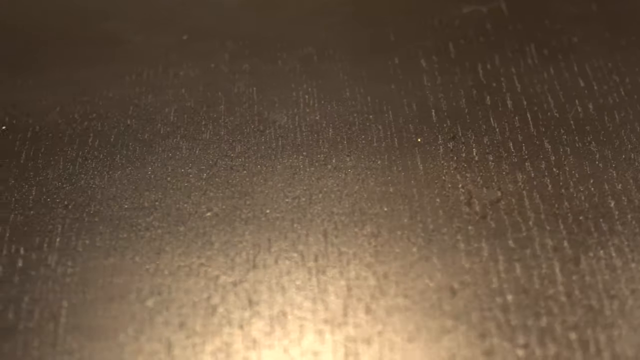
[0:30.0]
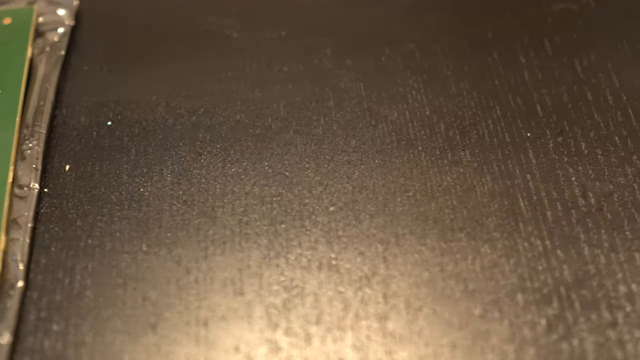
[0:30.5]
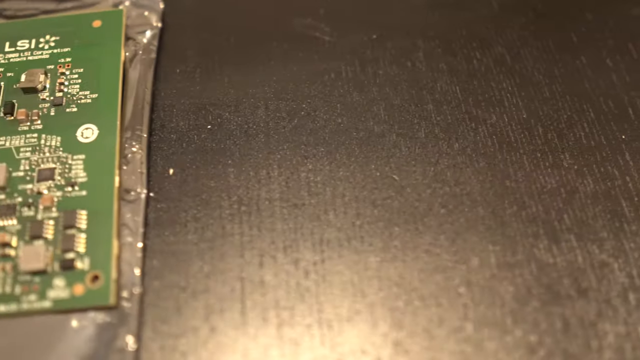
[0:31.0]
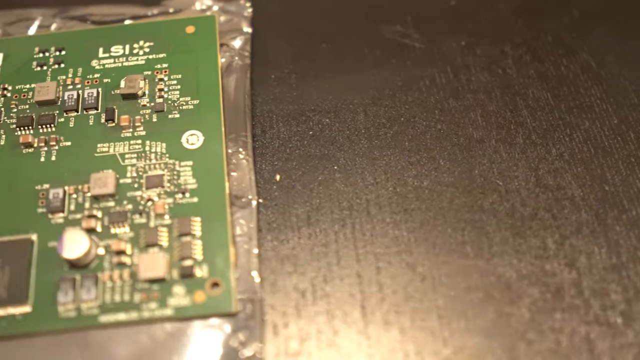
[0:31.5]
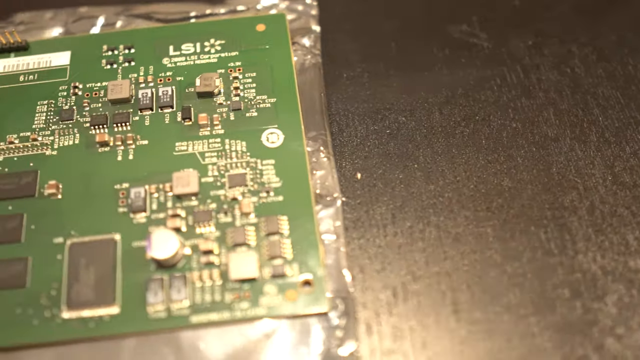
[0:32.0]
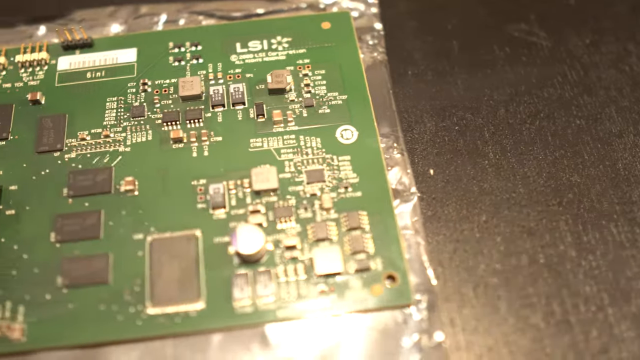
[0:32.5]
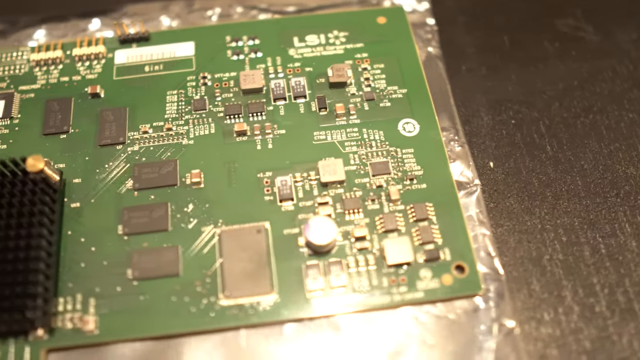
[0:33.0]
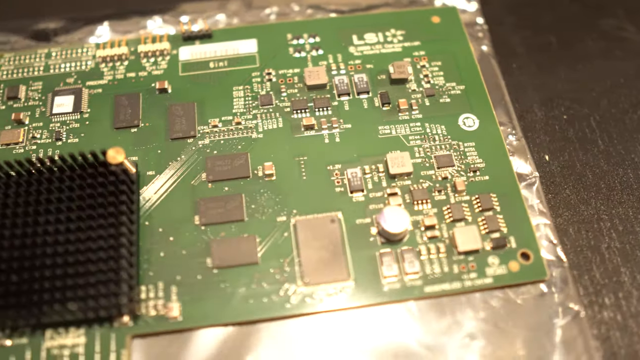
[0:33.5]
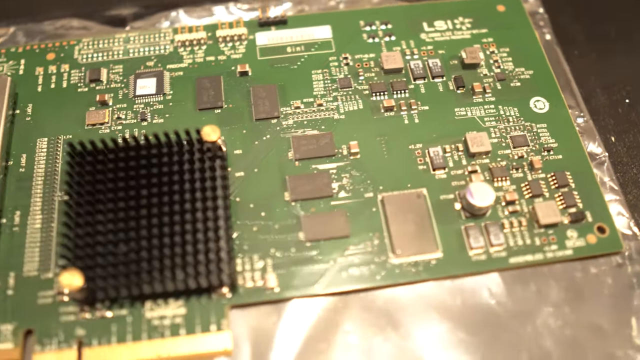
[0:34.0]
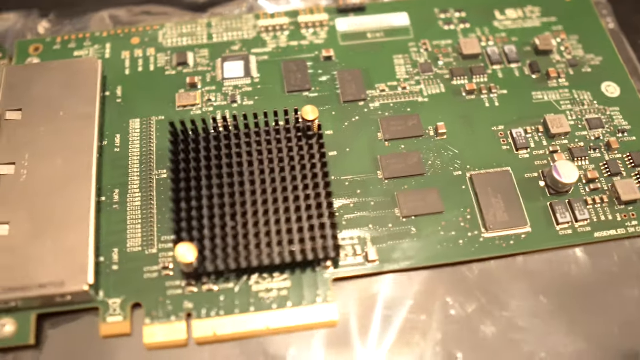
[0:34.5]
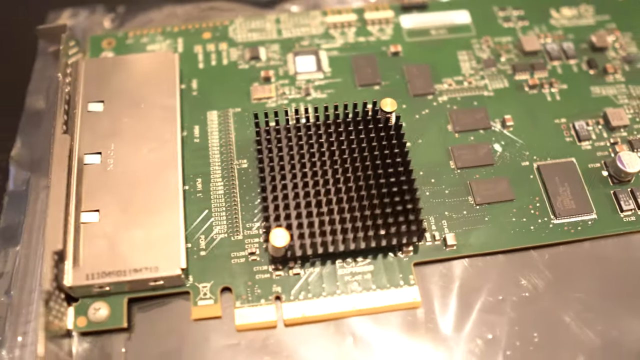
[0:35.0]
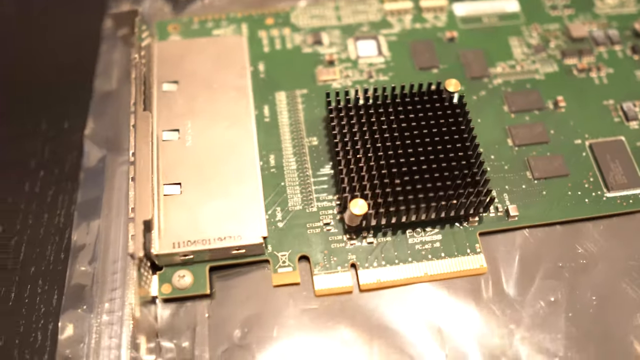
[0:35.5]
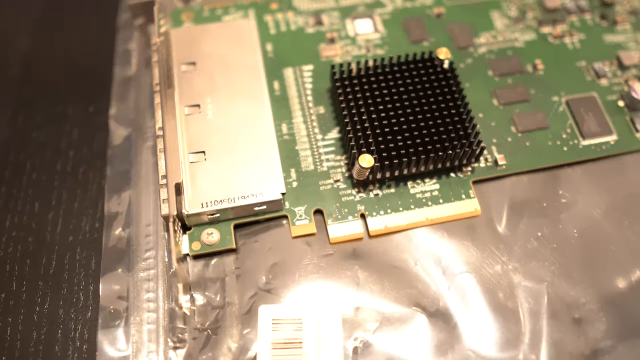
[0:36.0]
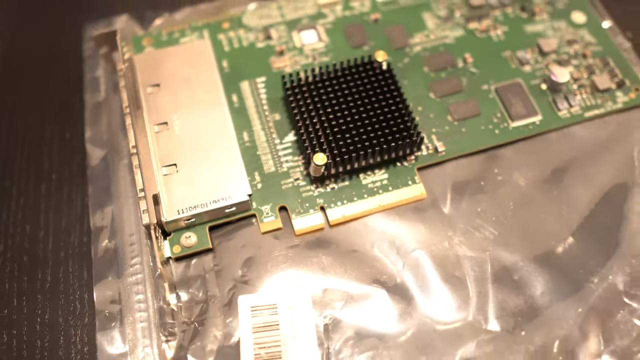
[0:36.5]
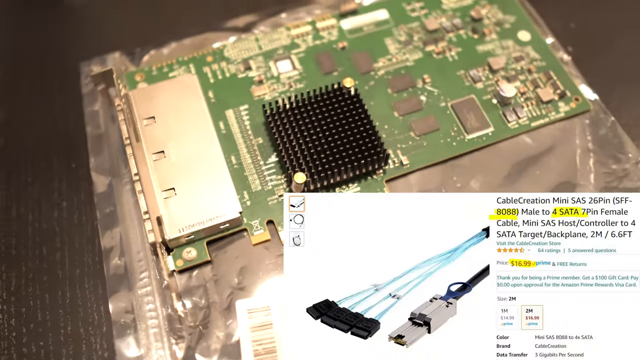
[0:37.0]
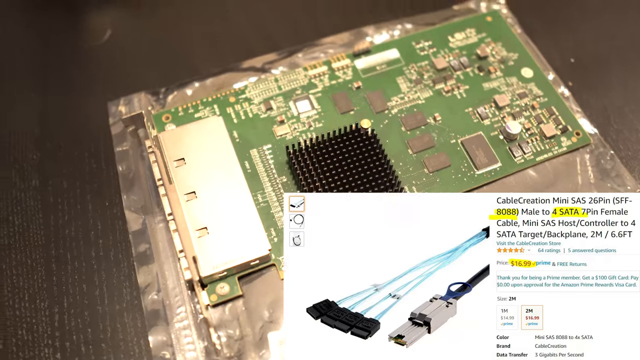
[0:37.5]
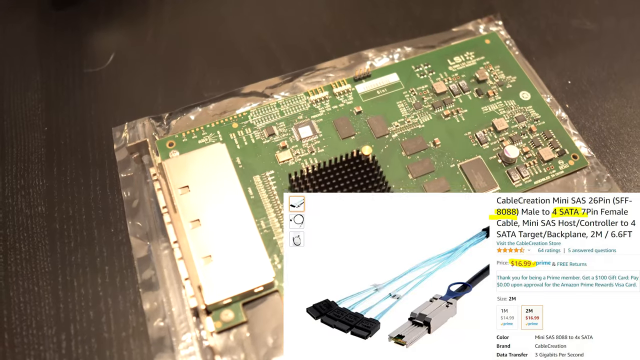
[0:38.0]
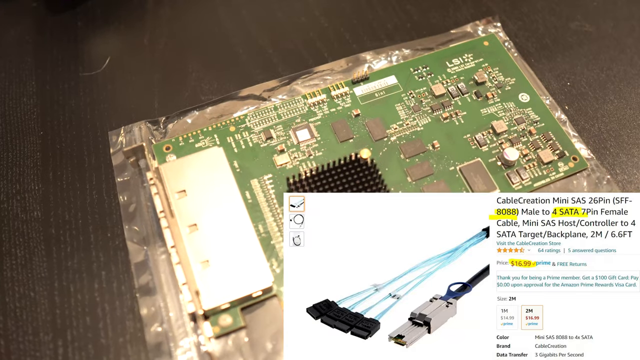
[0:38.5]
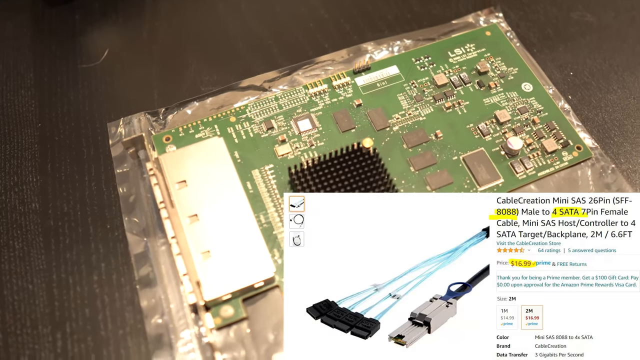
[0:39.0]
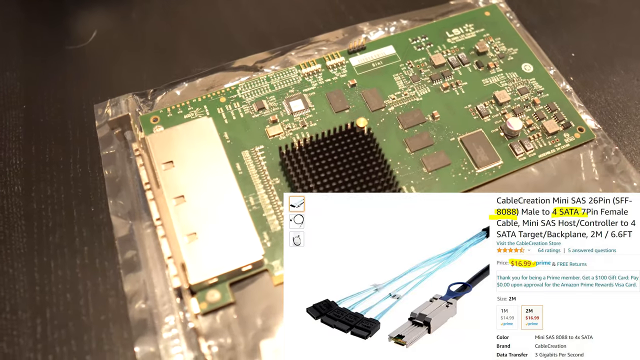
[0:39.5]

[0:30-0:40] The view is again an aerial one, panning across a motherboard or hard drive of a computer or instrument. In the background it appears to be lying on a table, with the packaging it came in underneath. A shiny light, apparently a flashlight, is visible. A white box pops up in the bottom right corner of the screen, seemingly an Amazon buy page, showing reviews, the backplane, the controller, and then the wiring. Further down, different delivery options for the product and how quickly it can arrive can be chosen. The final scene appears to show a large machine, with the motherboard being put back into the back of the unit.